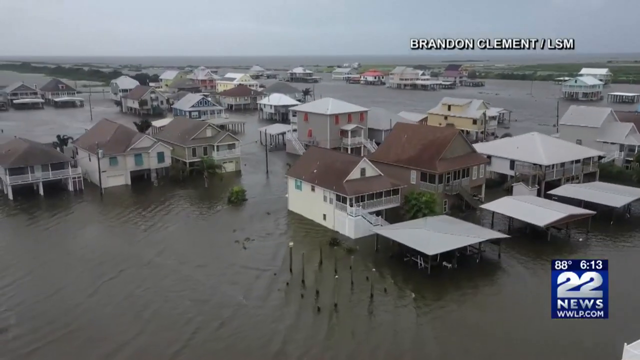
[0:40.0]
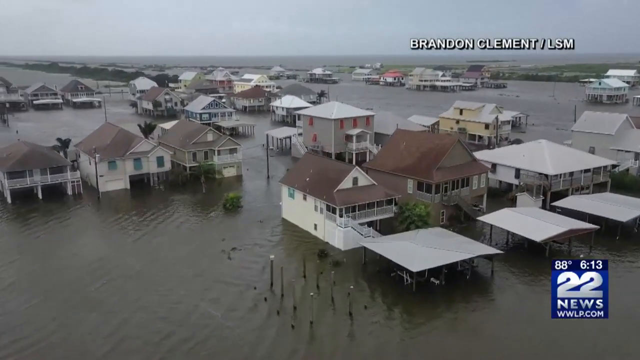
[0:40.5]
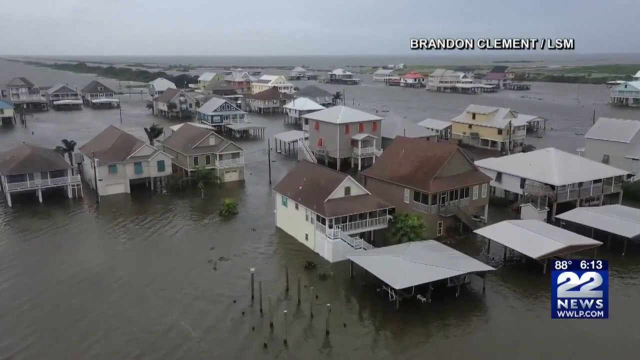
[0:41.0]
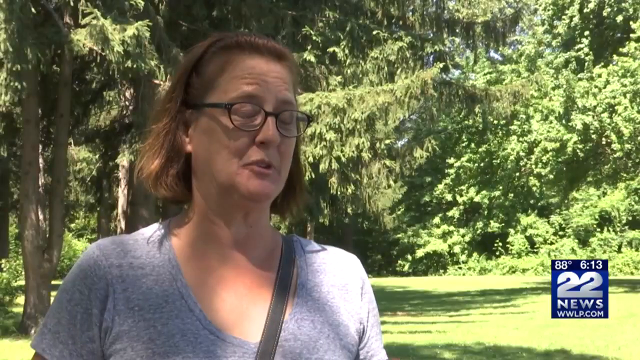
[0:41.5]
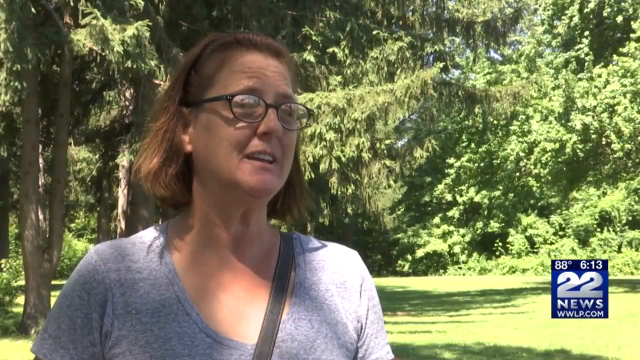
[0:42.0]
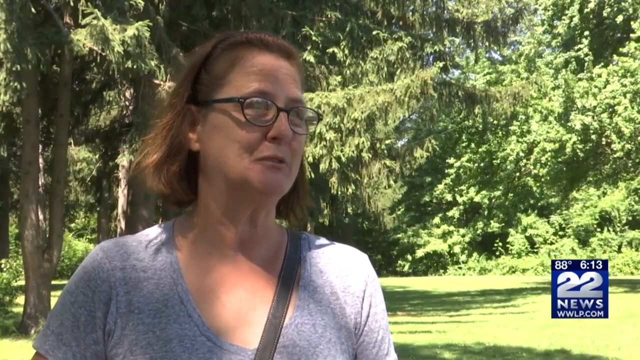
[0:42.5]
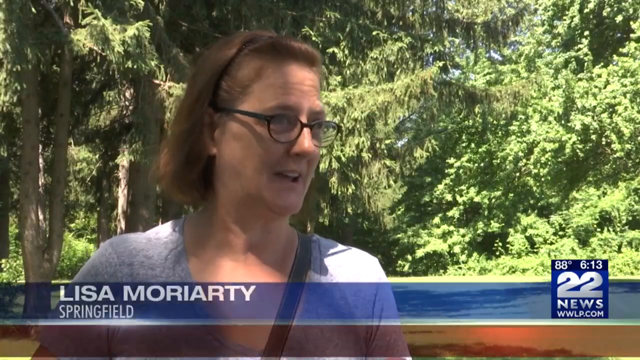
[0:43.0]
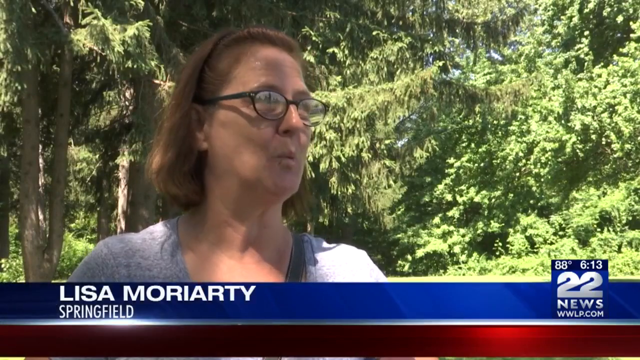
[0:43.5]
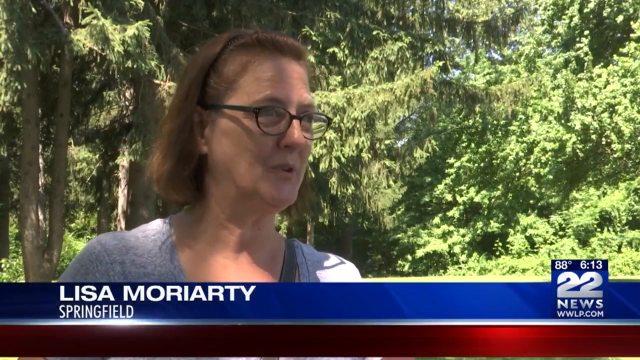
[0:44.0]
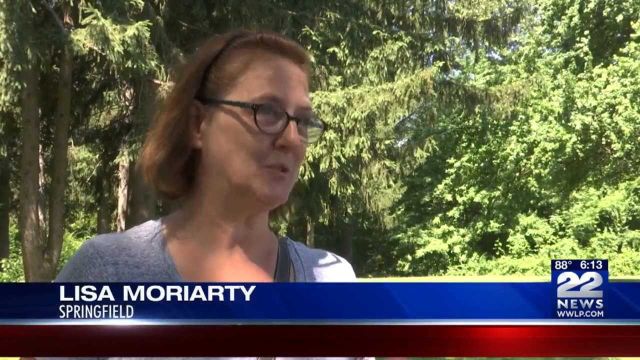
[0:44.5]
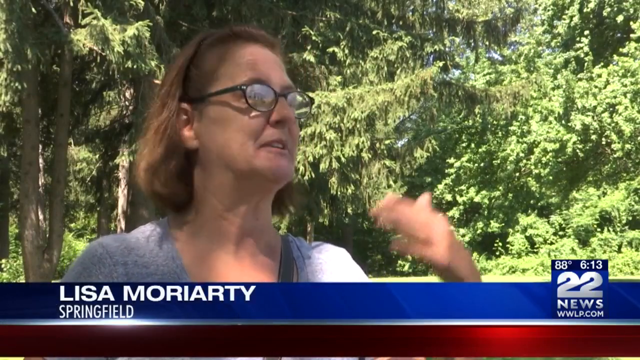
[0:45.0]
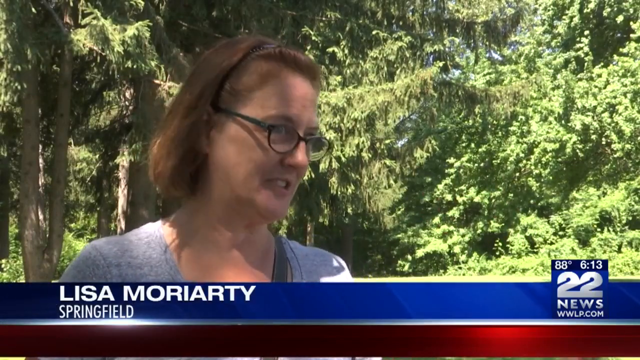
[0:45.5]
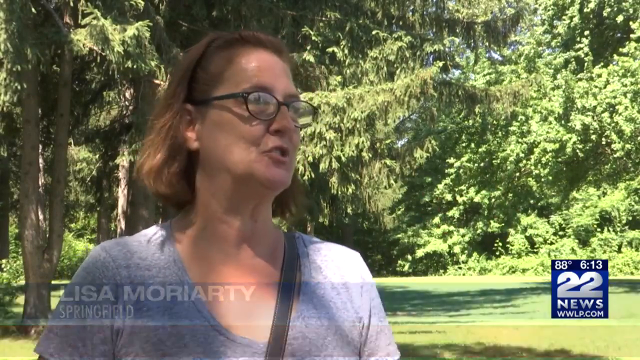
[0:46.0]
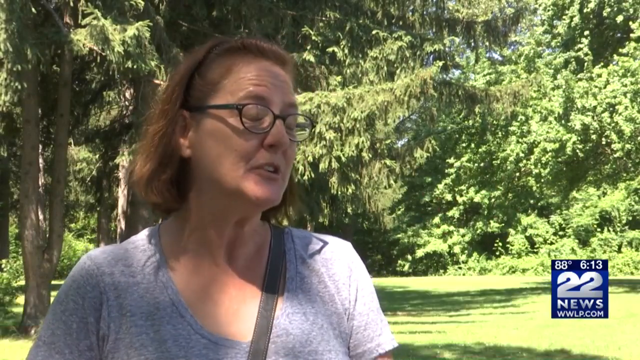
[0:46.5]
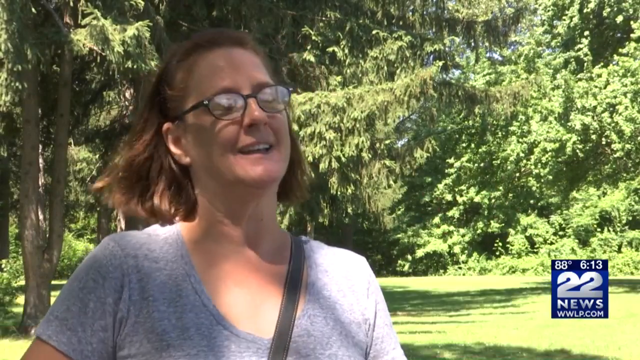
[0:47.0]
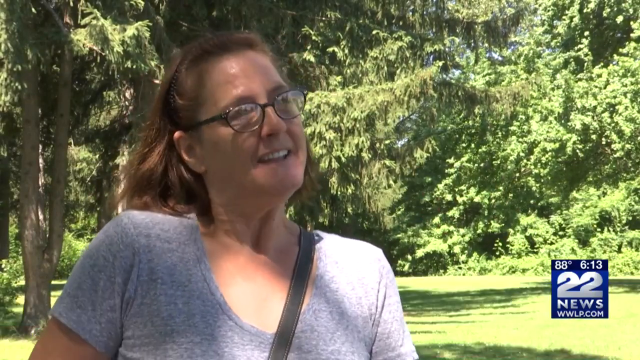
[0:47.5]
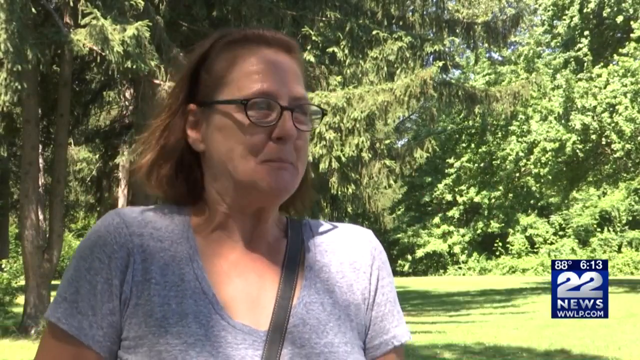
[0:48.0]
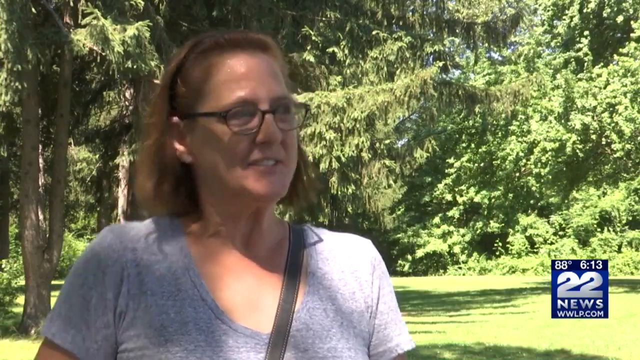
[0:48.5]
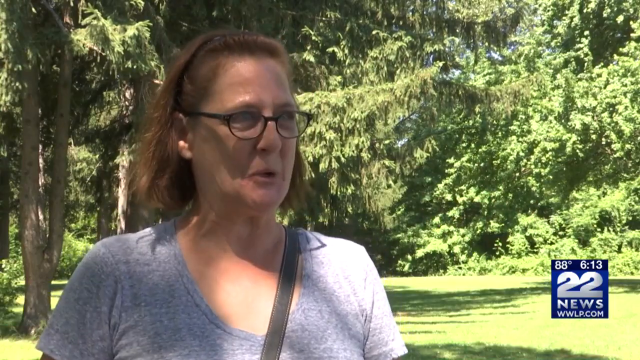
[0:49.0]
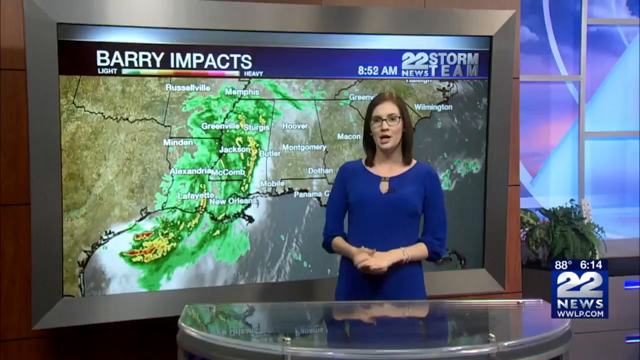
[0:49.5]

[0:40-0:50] Houses are submerged or almost submerged in floodwater. A woman with blonde hair and glasses, wearing a gray shirt, identified as Lisa Moratti of Springfield, talks about her flooded house. Pools, houses and cars are submerged in water. A correspondent then appears, wearing a blue shirt and glasses, with black hair in a bob cut, and the name "Brandon Clements" is on the screen.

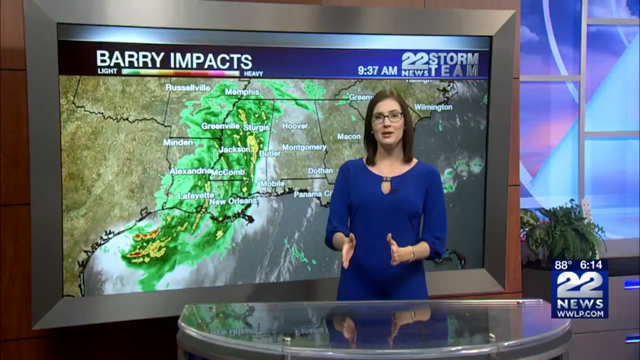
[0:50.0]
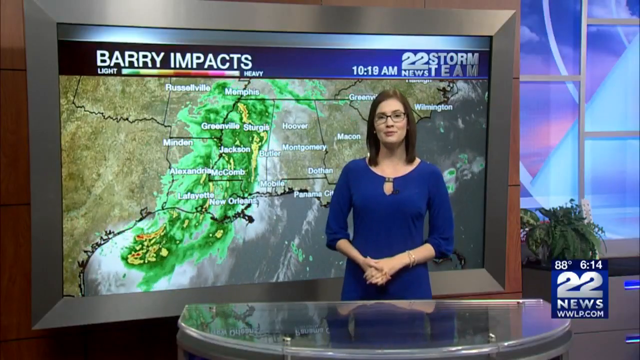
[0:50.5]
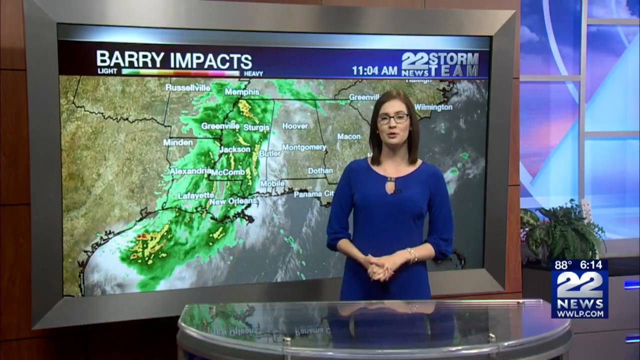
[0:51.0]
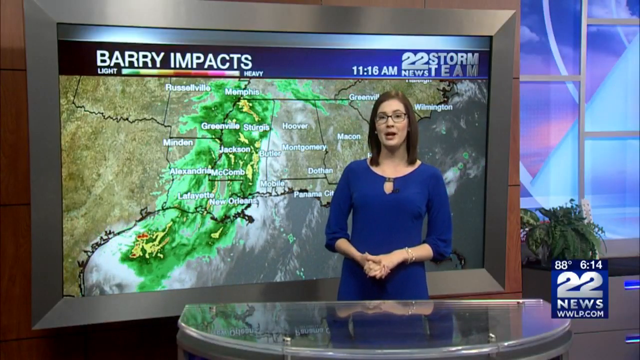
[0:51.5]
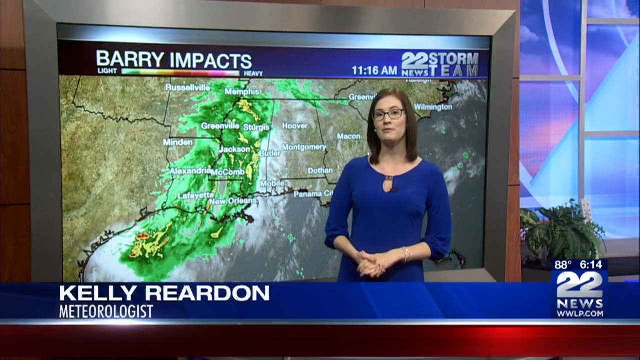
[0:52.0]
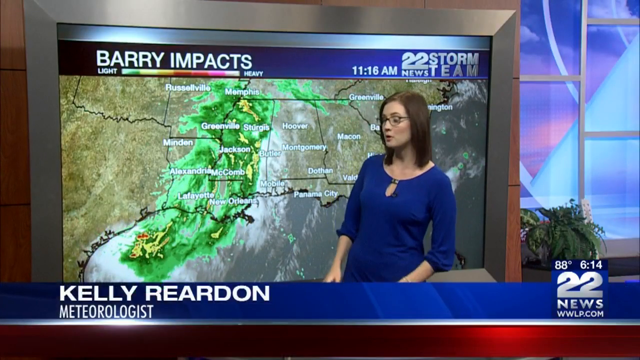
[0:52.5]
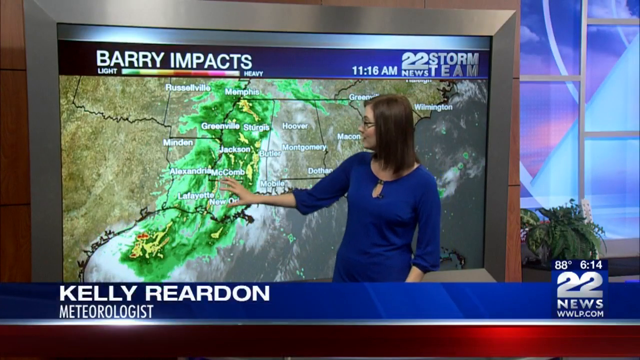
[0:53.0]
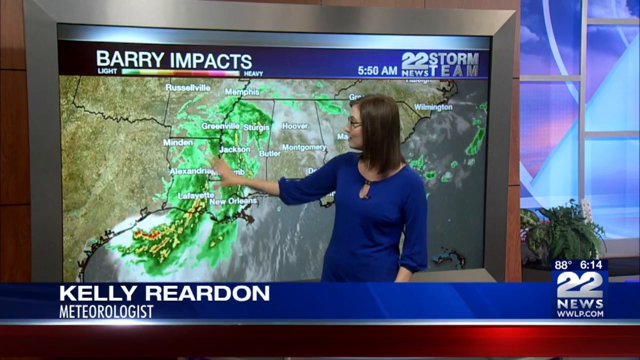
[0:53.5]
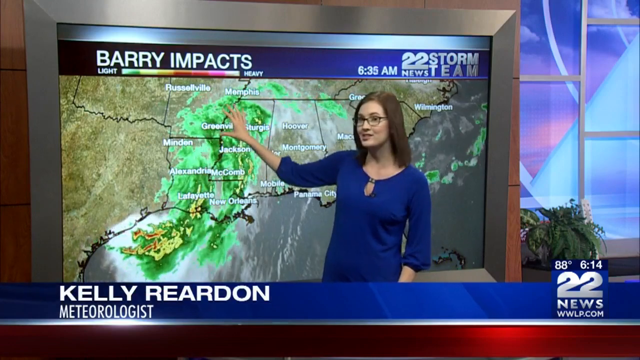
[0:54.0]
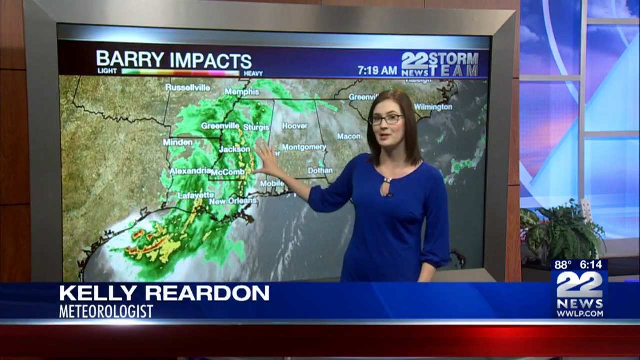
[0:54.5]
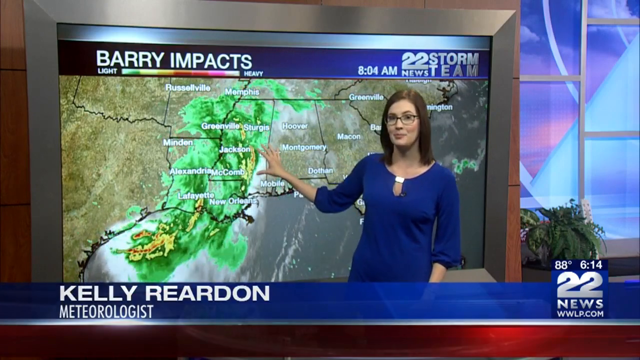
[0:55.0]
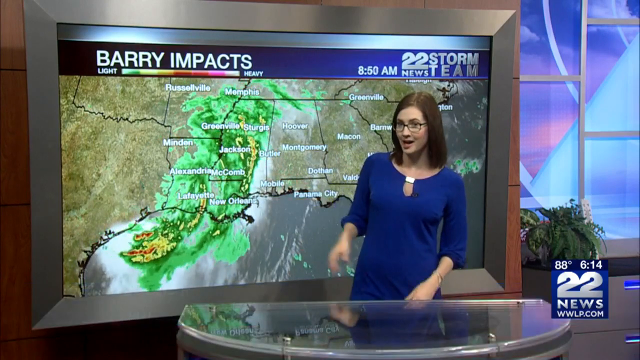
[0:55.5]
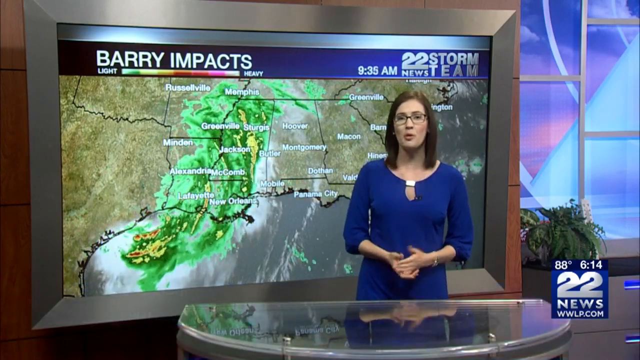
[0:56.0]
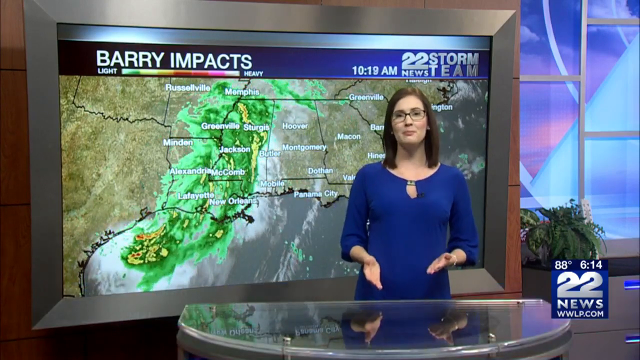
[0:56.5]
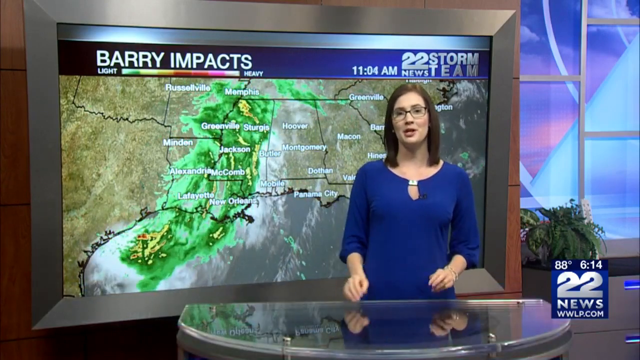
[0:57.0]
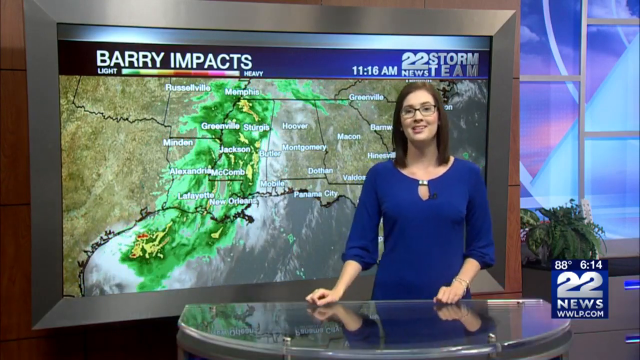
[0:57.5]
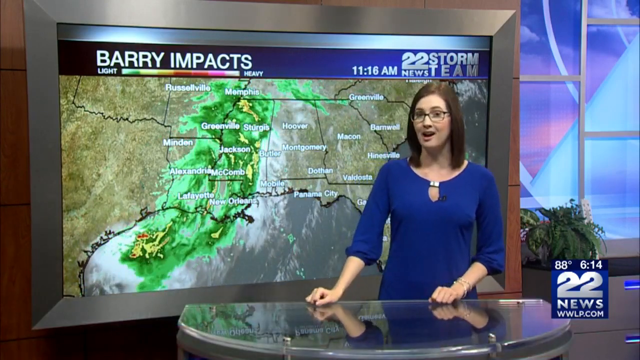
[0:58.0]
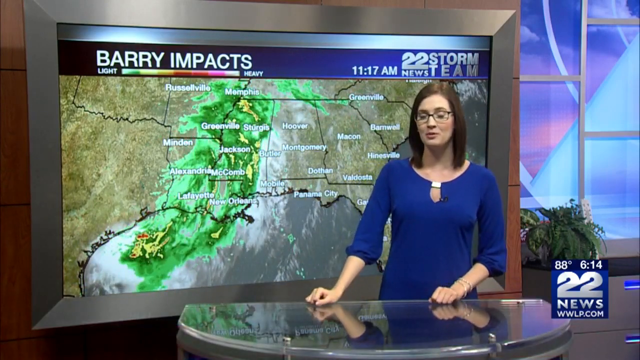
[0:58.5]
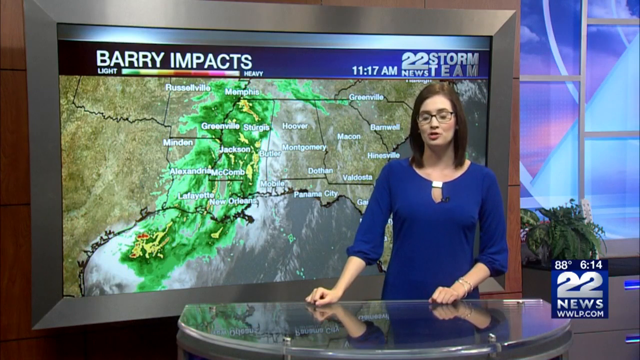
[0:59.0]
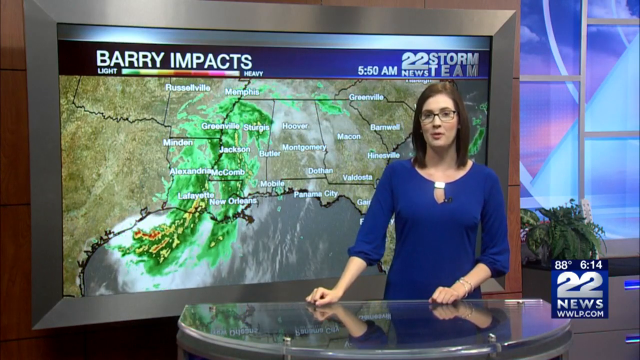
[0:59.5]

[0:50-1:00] A female correspondent in a blue gown, with glasses and black bob-cut hair, talks about flooded areas. A screen behind her shows the flood's impact on various areas. She points at the flooded areas, including Alexandria, McCombs, Lafayette, New Orleans, Mumbai, Butler, Montgomery, Hoover, Palmer, Washington and Greenville. Some places on the screen are marked green, and she points at them.